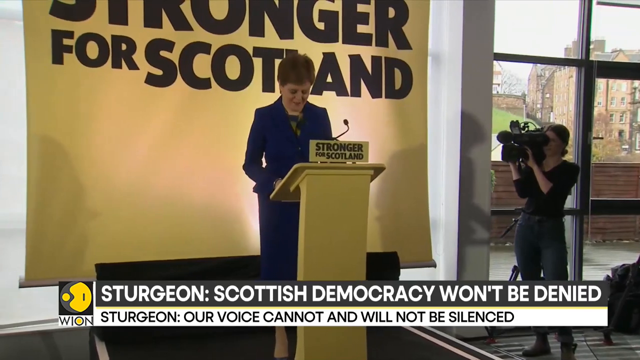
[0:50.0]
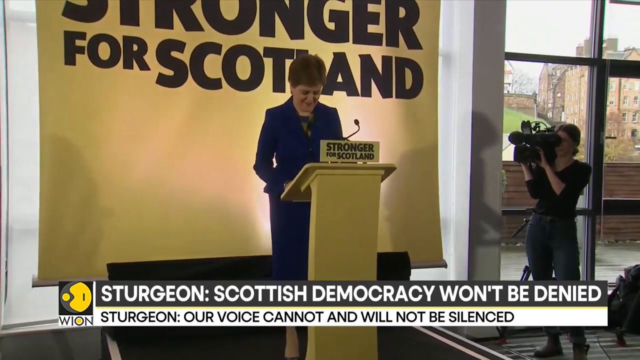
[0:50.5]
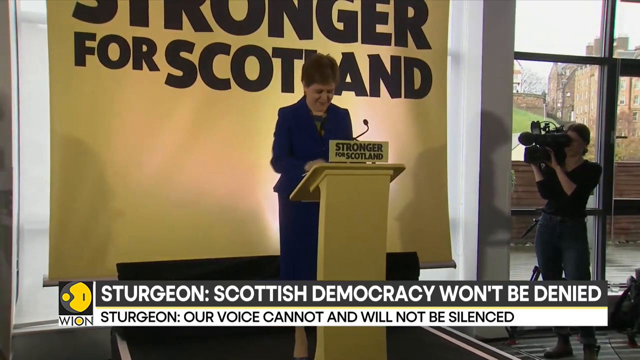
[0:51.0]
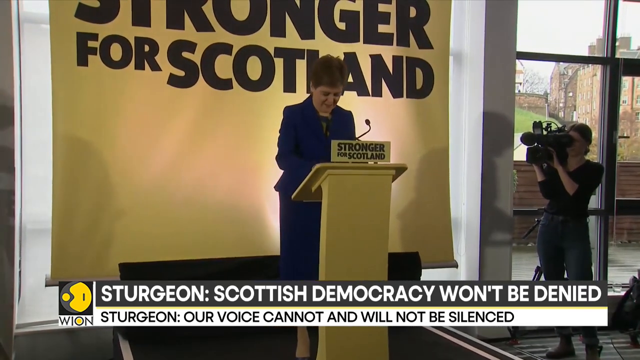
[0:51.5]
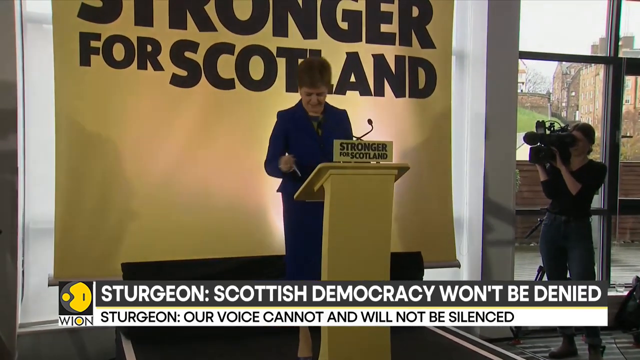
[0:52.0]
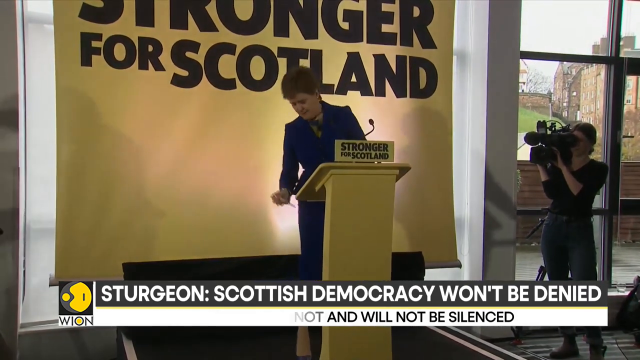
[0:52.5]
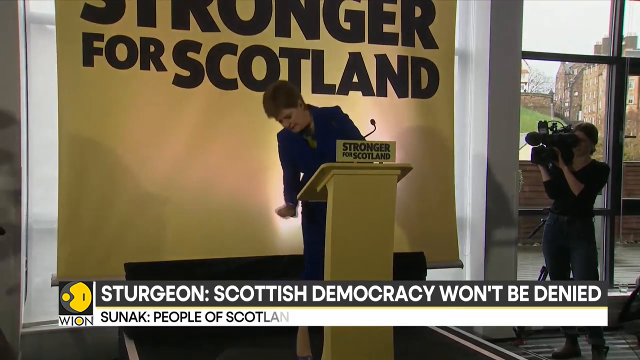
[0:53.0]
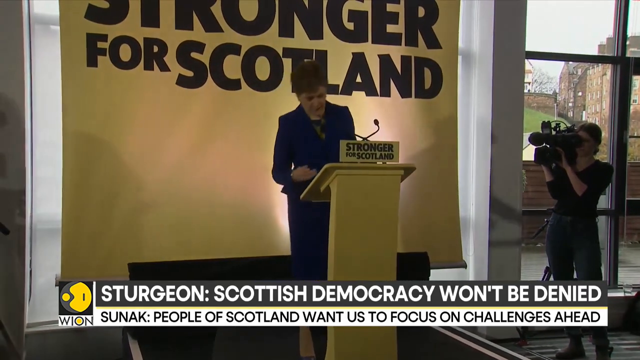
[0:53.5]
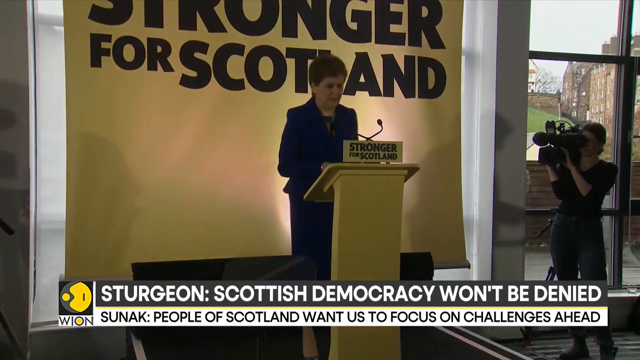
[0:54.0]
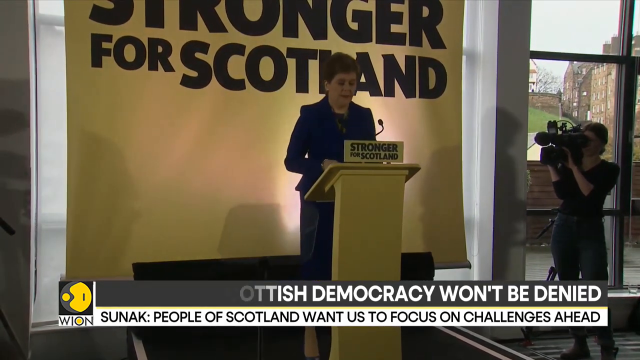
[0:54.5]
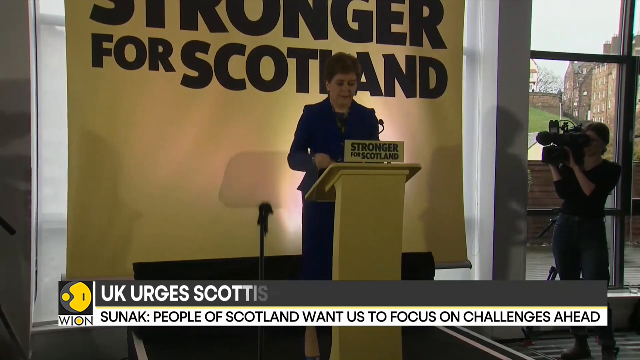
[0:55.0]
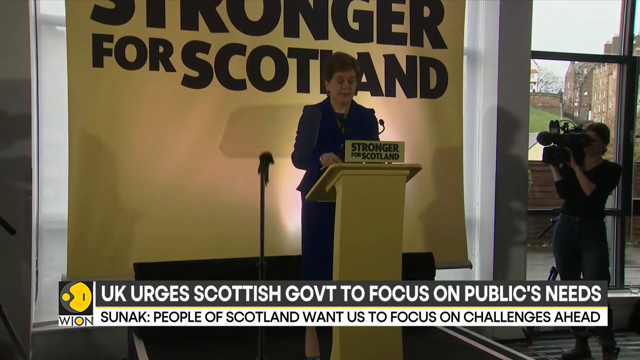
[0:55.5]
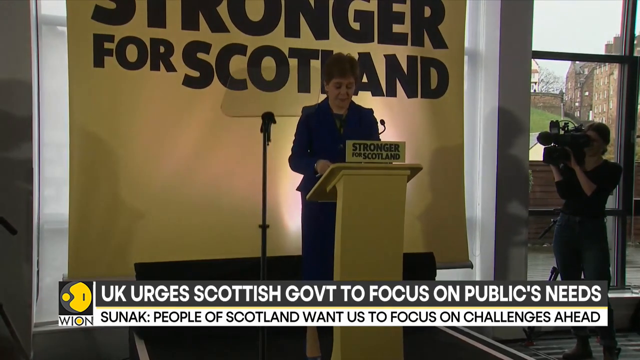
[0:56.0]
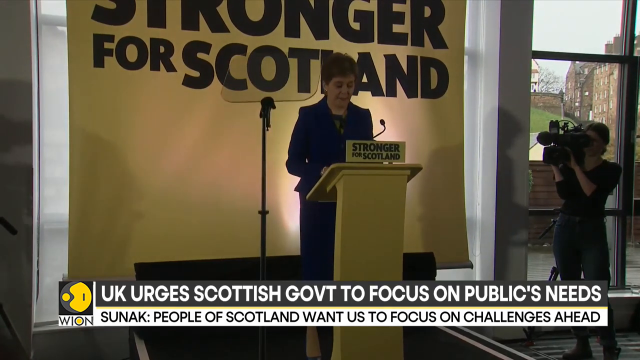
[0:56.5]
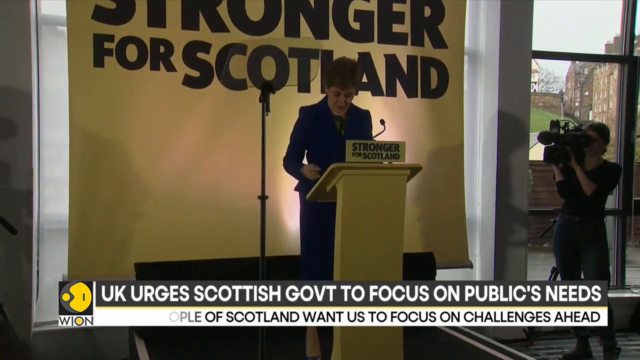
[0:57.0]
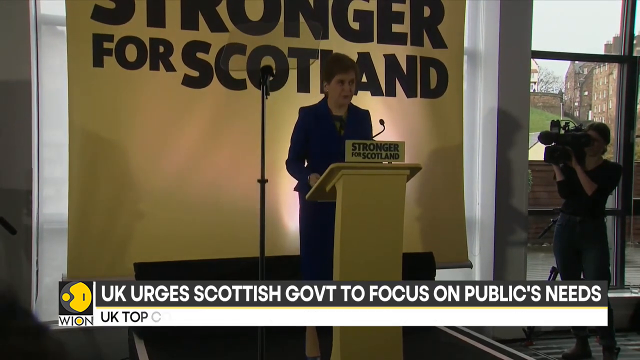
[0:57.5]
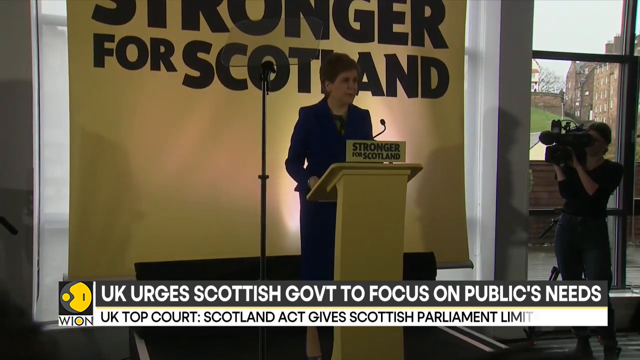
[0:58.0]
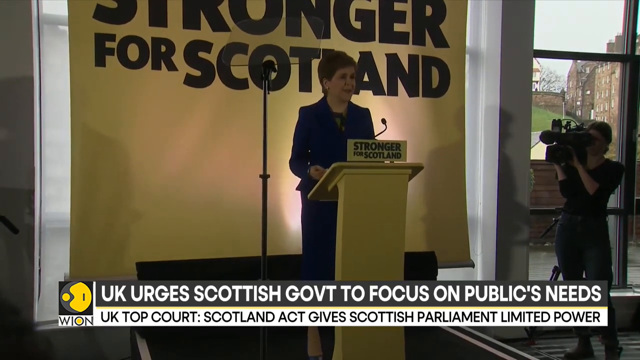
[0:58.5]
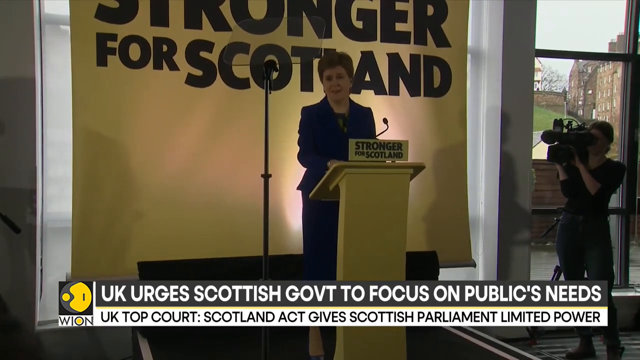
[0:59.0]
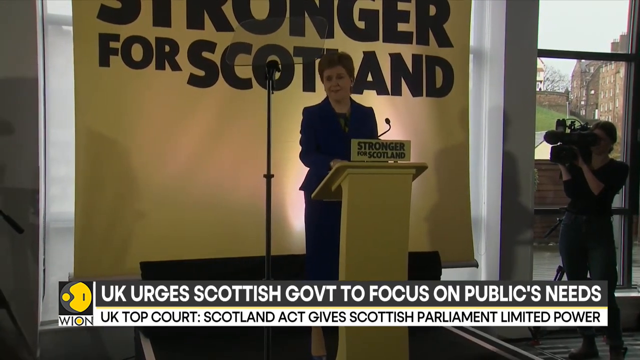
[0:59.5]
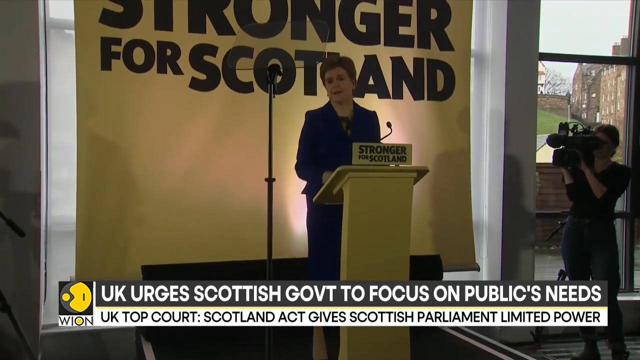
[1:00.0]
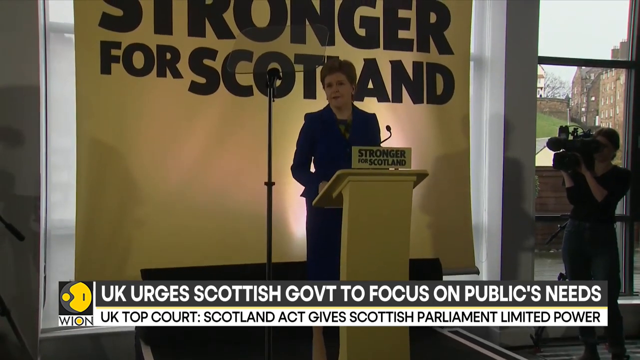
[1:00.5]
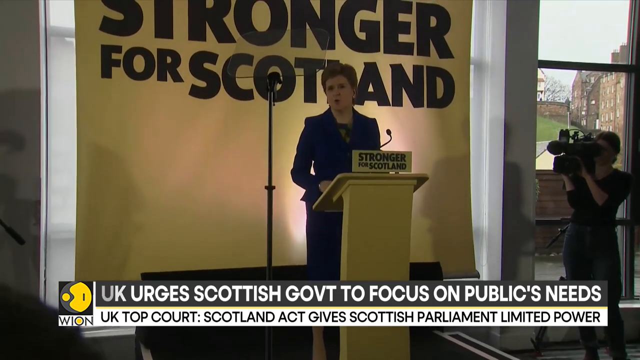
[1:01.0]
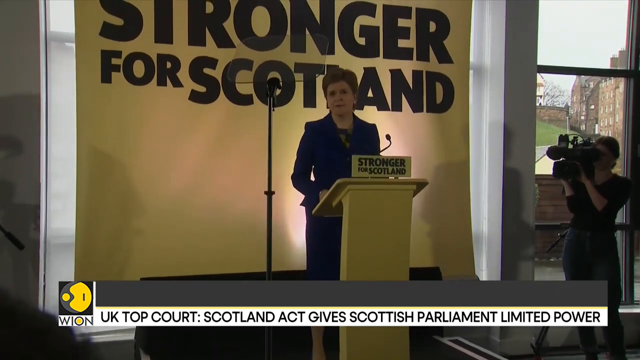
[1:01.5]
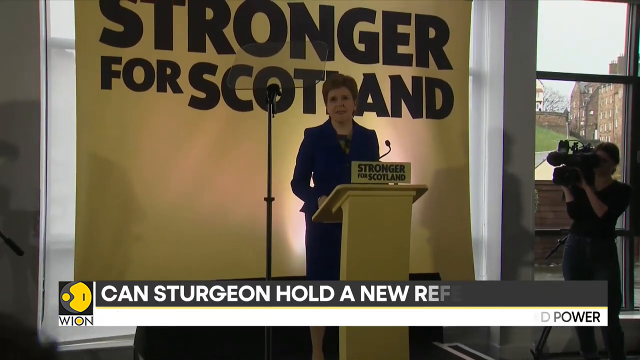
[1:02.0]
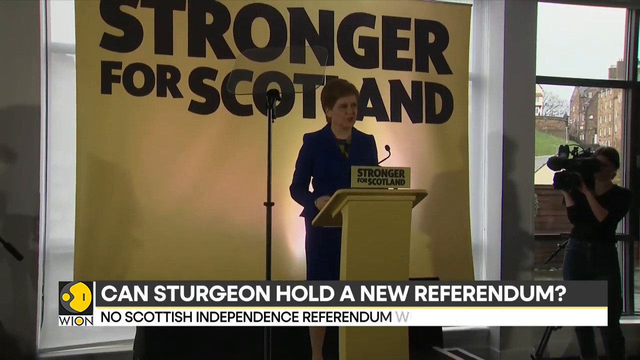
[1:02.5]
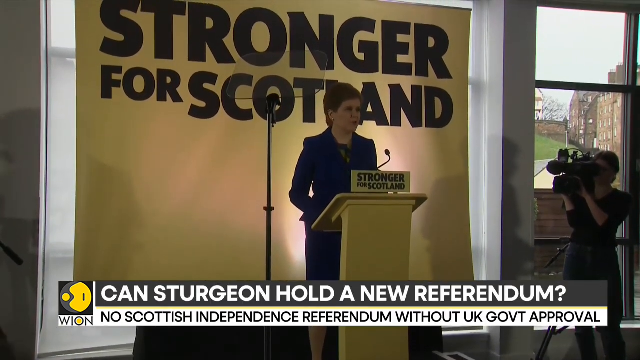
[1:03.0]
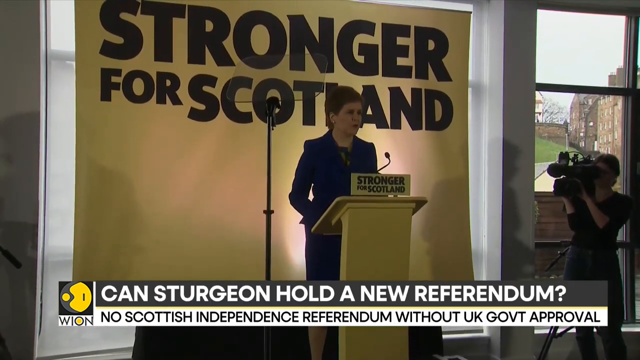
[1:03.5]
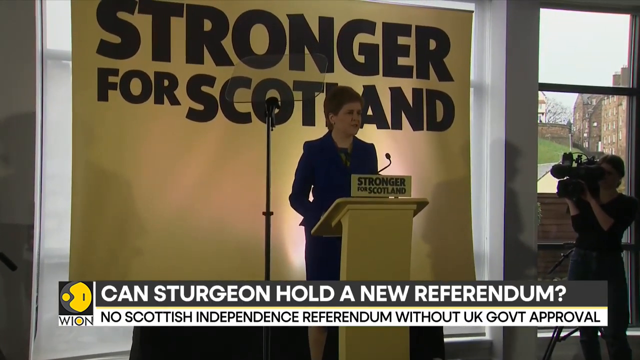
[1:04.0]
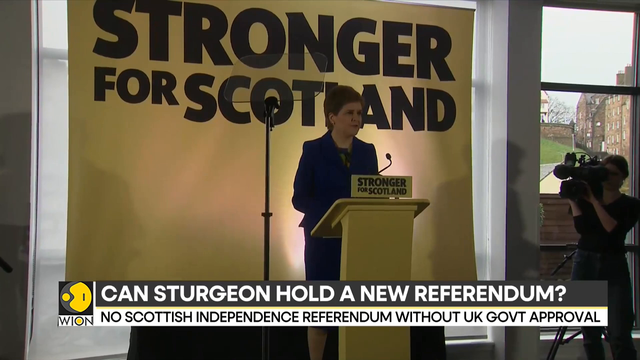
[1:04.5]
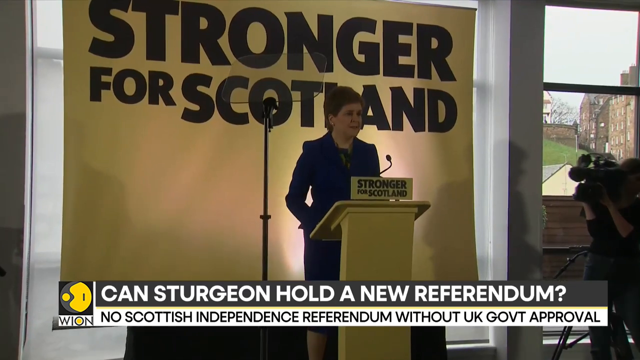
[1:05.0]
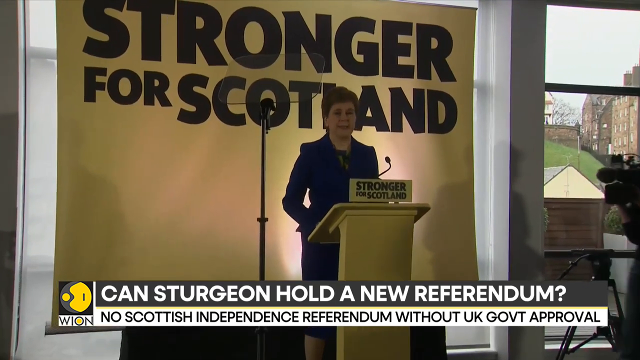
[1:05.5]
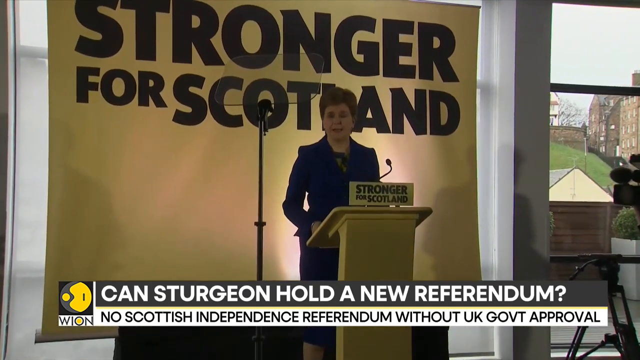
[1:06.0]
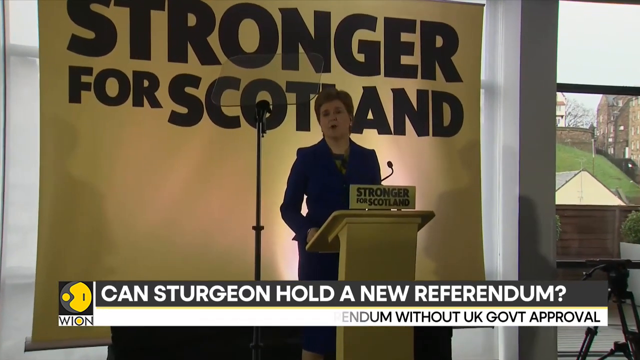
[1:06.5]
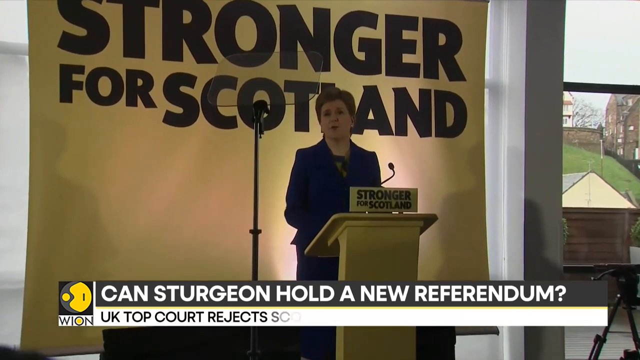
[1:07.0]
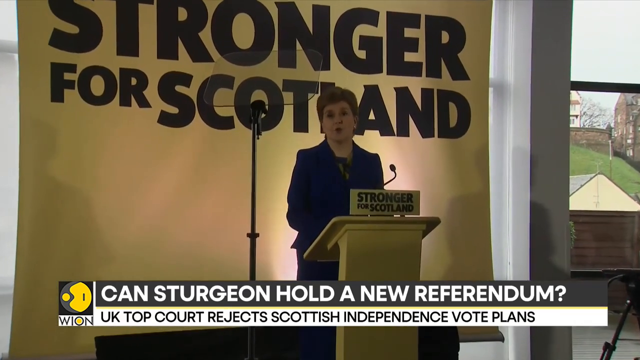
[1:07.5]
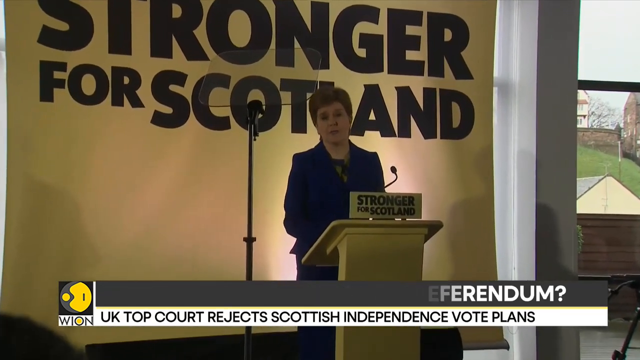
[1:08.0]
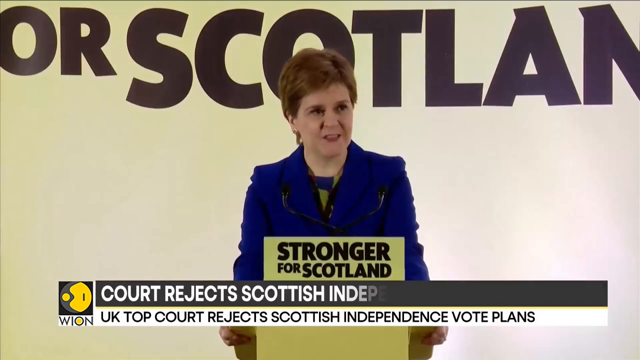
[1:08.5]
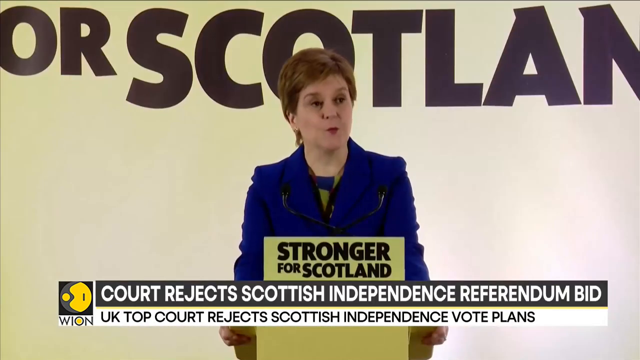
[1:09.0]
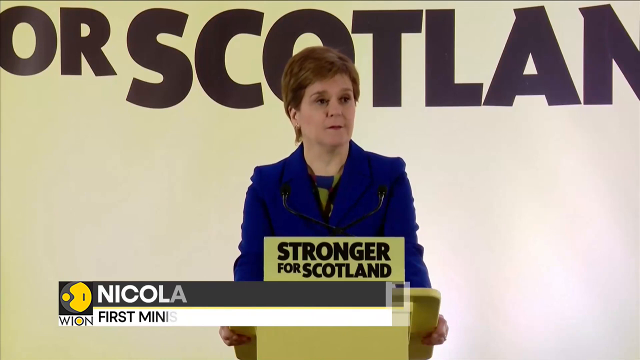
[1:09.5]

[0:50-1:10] The woman at the podium appears to be talking. A banner comes up reading "UK urges Scottish government to focus on the public's needs top court on Scotland act gives Scottish Parliament limited power." In the background there is a microphone or a tripod rising up to the podium on the stage. Another banner reads "can Sturgeon hold a new referendum. No Scottish independence referendum without UK government approval." The view moves closer to the woman: she is a white woman with red hair and thin eyebrows, wearing a blue blazer with what appears to be a patterned shirt under it. She purses her lips as if she is talking. She may be the party leader, possibly Sturgeon herself.